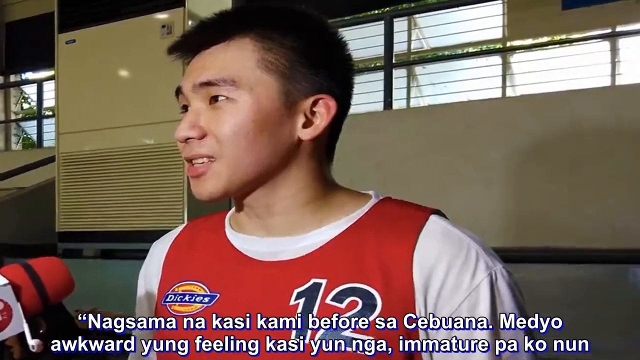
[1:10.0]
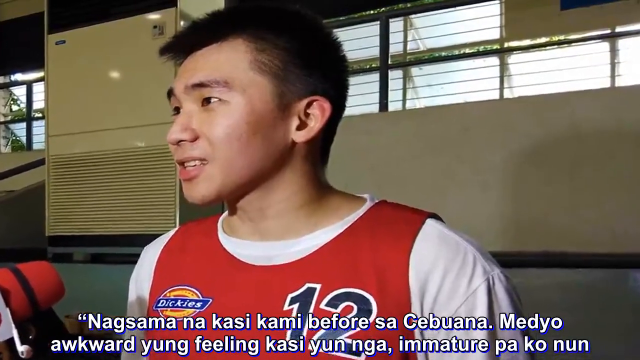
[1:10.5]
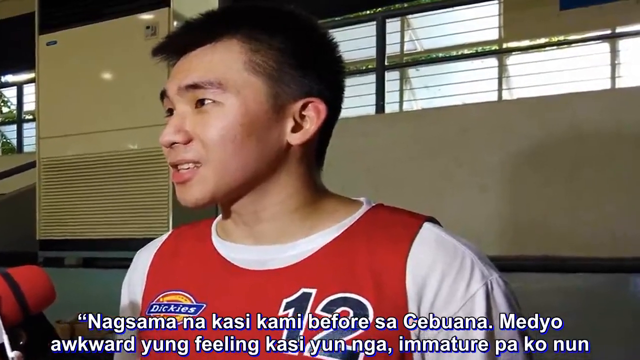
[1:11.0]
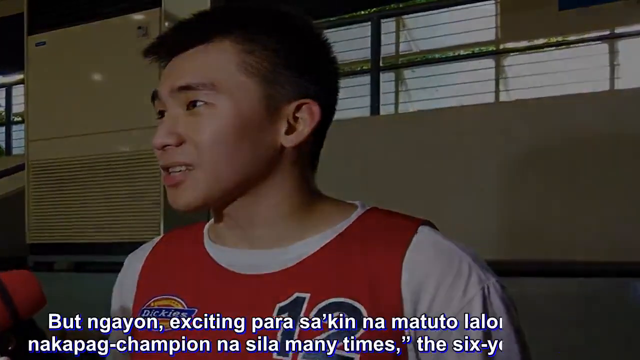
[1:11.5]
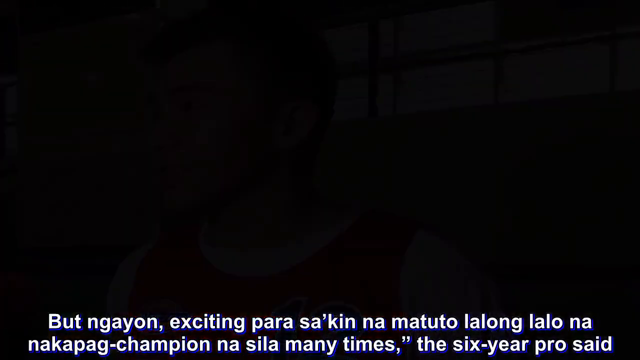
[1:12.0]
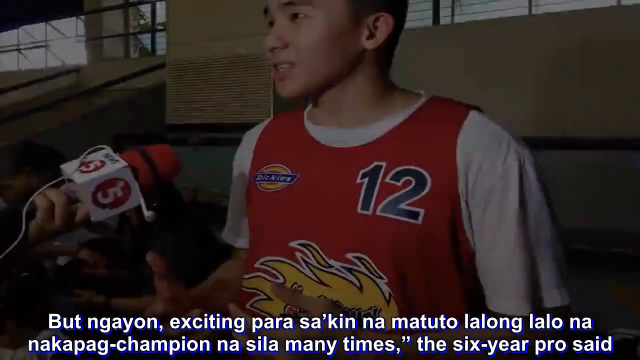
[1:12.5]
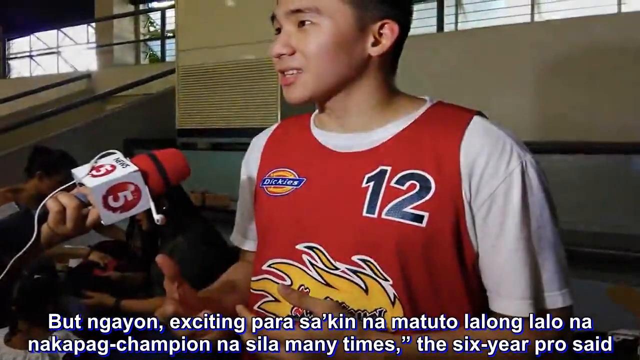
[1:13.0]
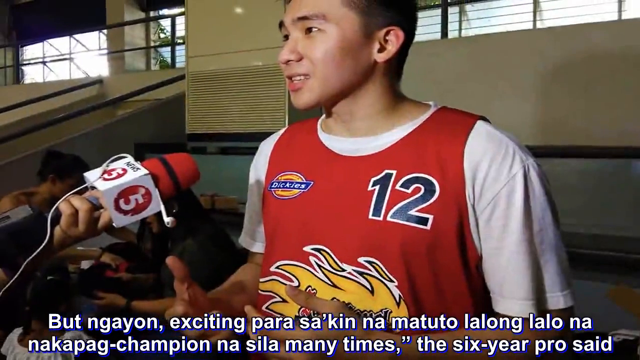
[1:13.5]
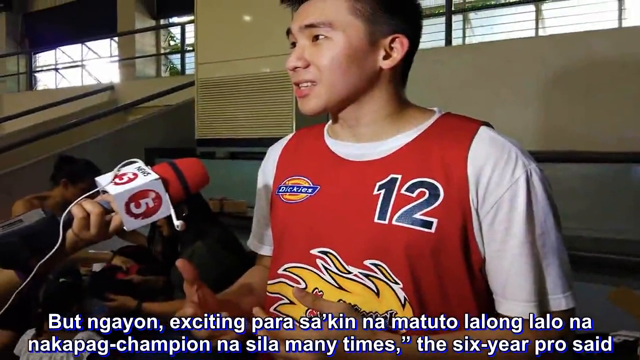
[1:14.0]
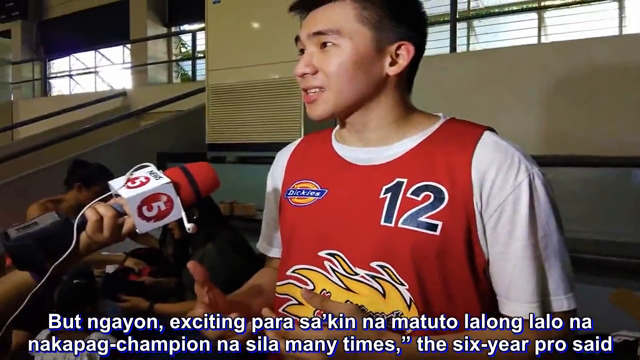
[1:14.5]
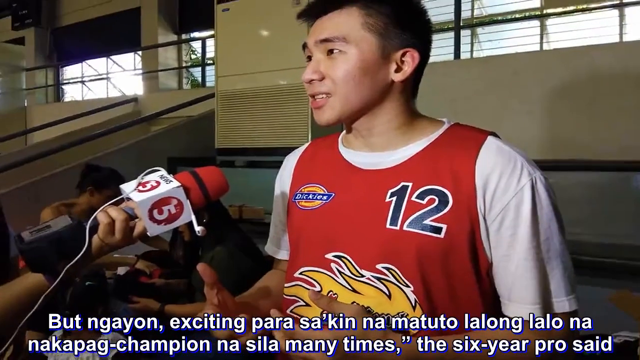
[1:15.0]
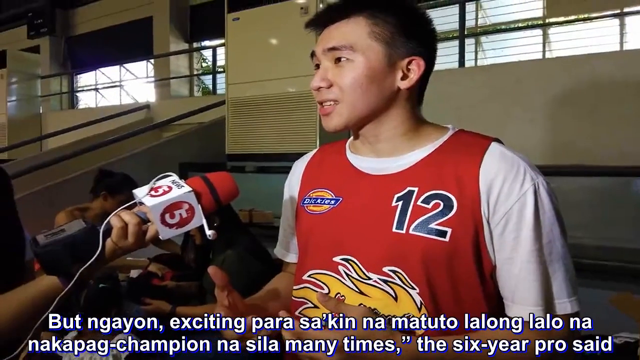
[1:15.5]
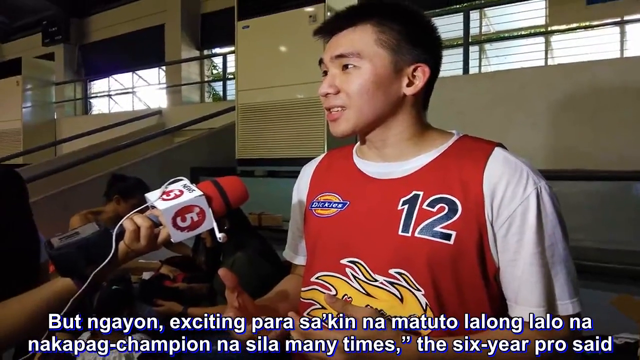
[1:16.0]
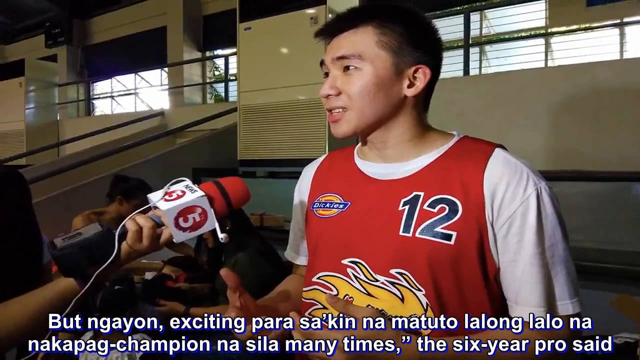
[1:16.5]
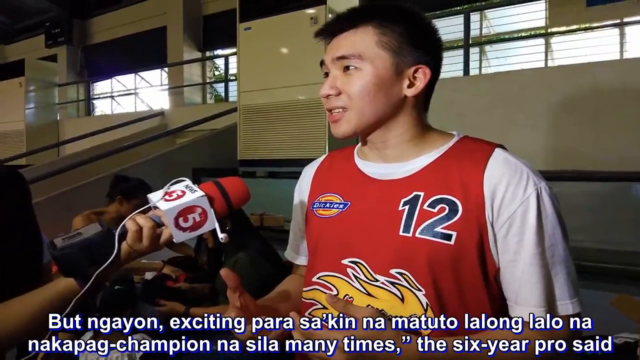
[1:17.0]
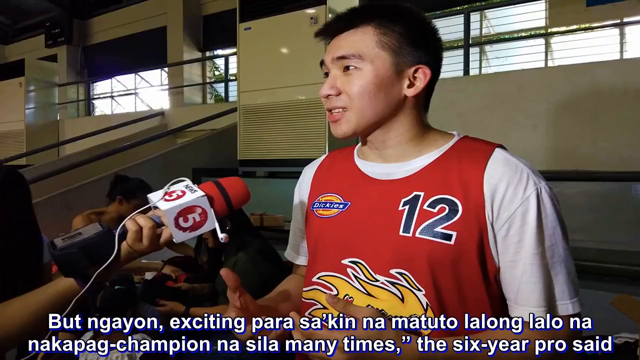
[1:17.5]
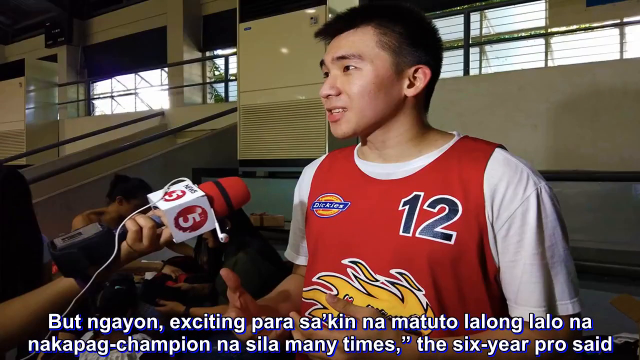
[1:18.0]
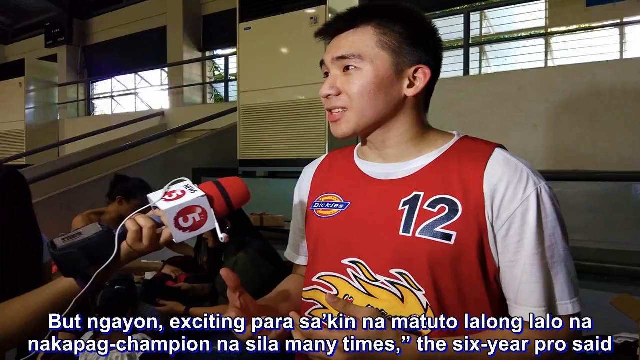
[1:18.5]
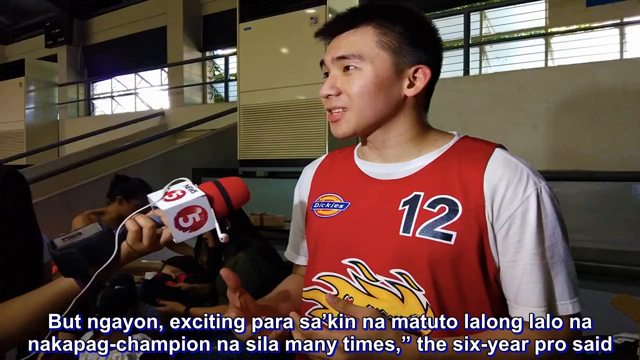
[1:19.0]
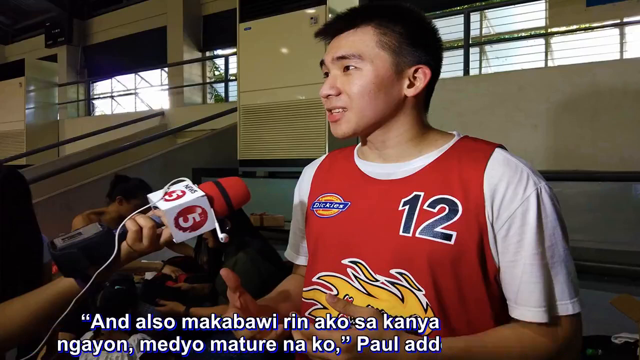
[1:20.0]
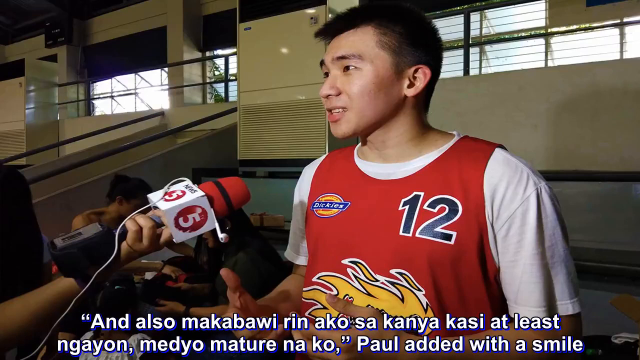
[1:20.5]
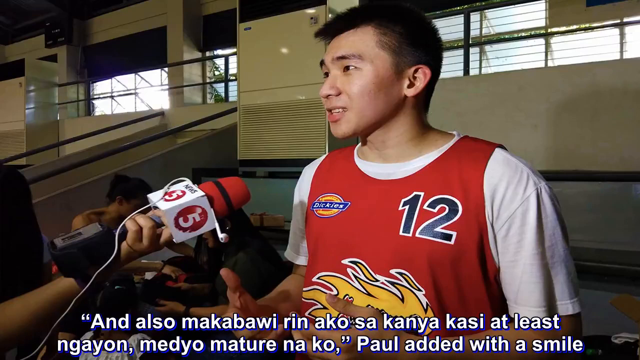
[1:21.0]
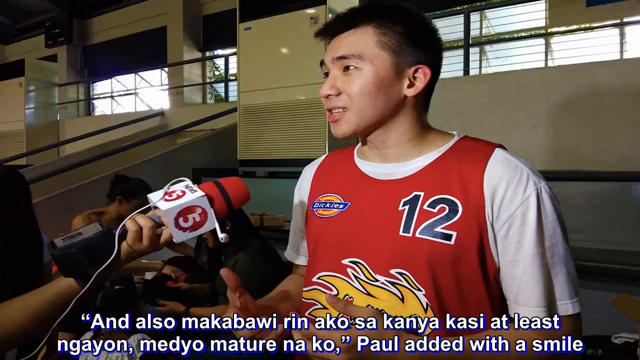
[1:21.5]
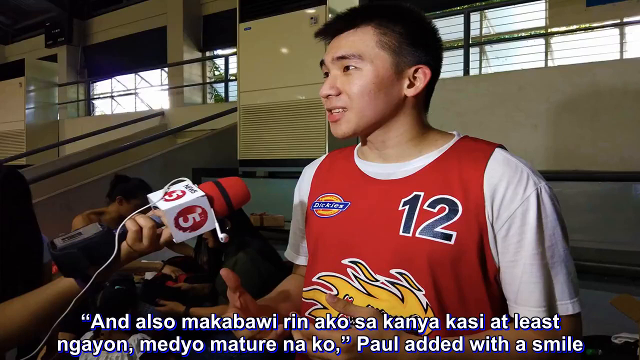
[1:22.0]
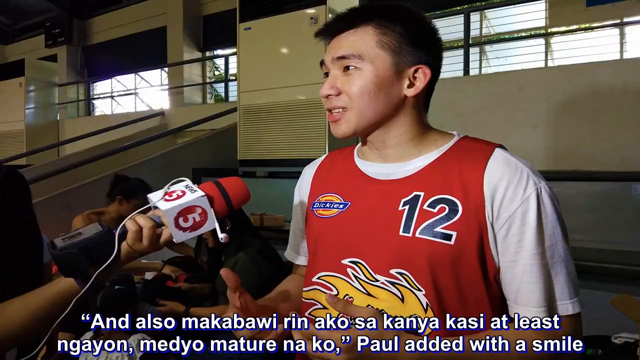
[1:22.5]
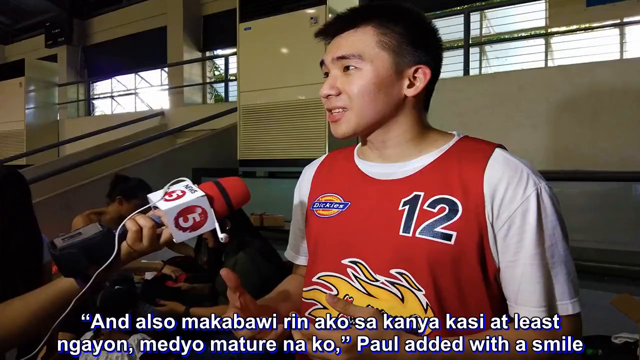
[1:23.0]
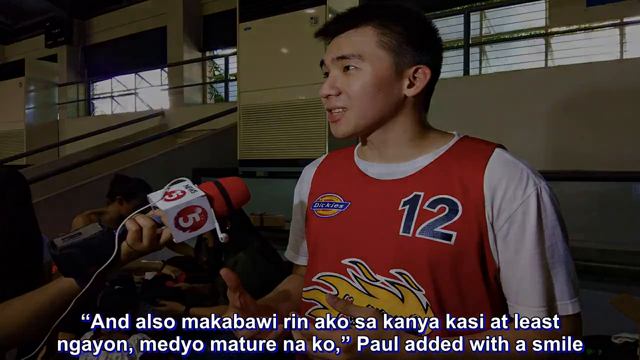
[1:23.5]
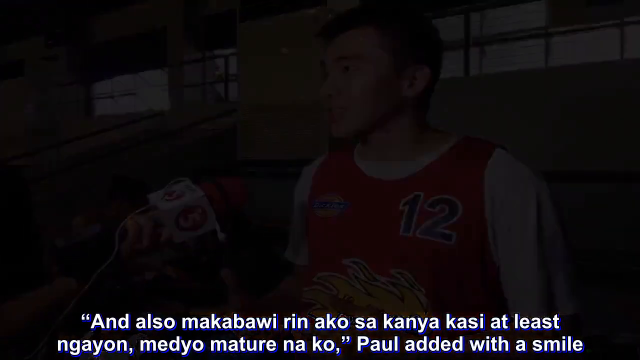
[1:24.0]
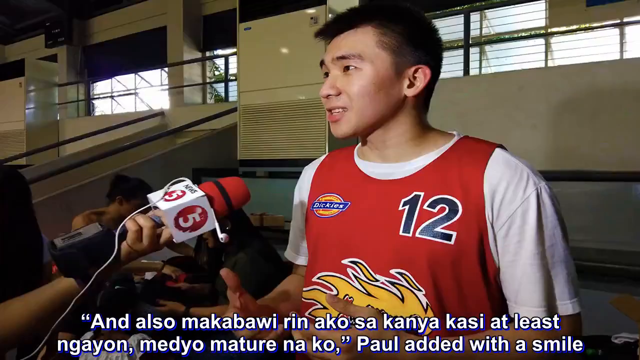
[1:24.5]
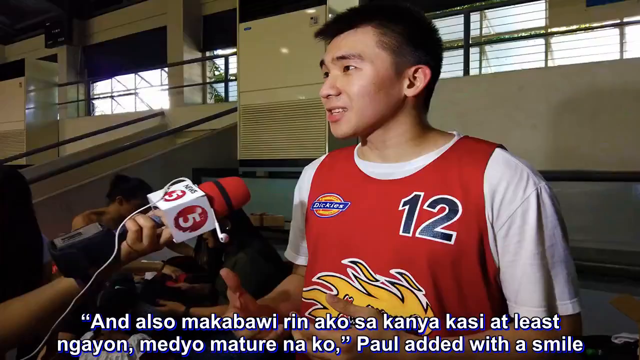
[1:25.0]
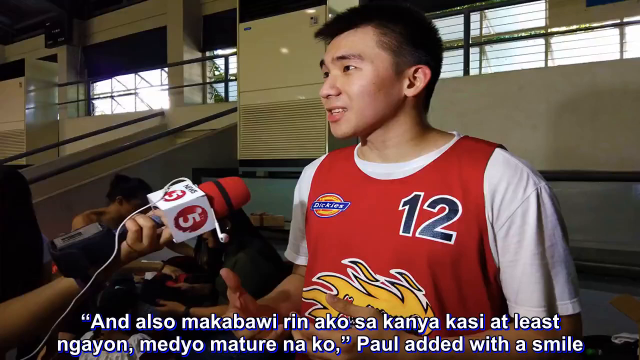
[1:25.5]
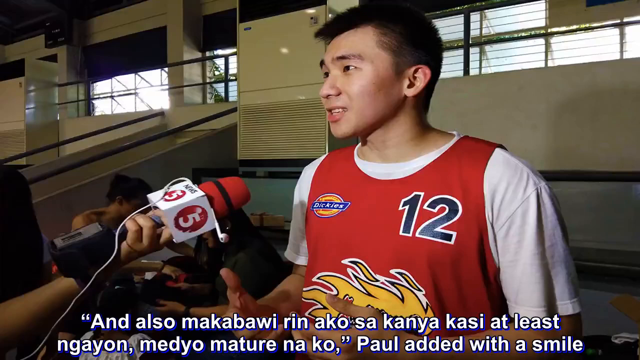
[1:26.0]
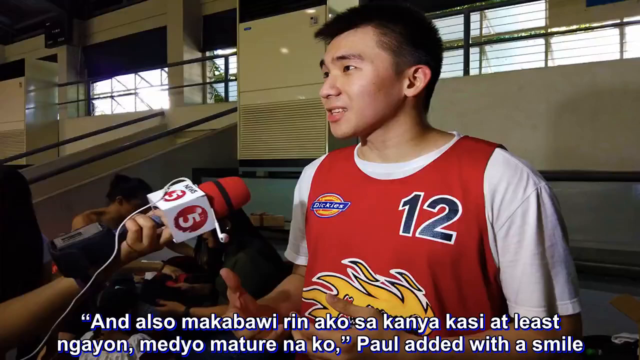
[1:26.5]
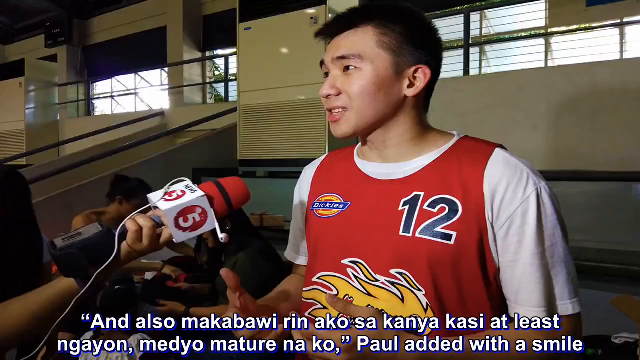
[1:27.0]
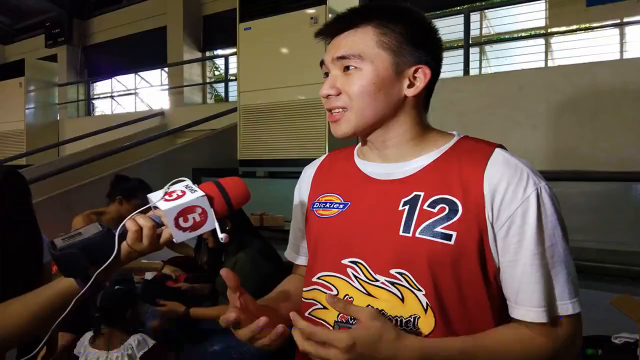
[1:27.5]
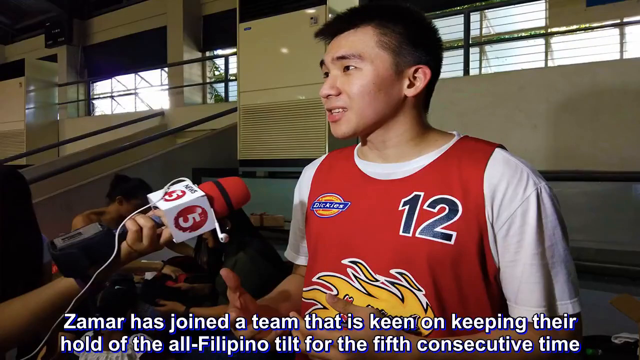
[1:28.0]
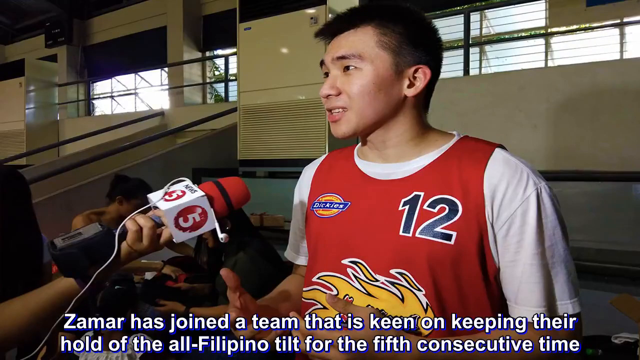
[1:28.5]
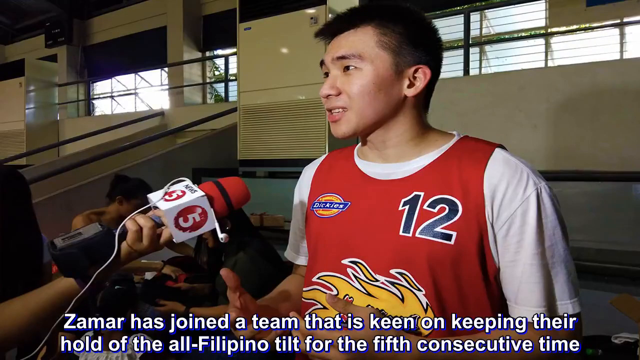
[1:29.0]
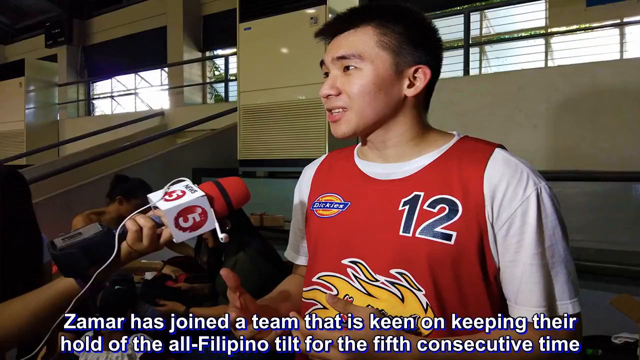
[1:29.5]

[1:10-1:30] The same scene shows the inside of a sort of auditorium or stadium where the man is being interviewed. He is an Asian male in his 20s or 30s with short black hair, wearing a red jersey over a white undershirt. The background is a very white wall, with multiple windows in the top half of the frame and light sort of beaming in, indicating daytime. The image shakes a little before zooming in, then the scene changes to the same image zooming outward. The text at the bottom is in a foreign language and keeps updating. At the bottom left, a woman holds out a white and red microphone with the word "news" and the number five on it, with a corded earbud laid on top of it. Behind the microphone in the background, two women of Asian descent with black hair sit. The woman holding the microphone appears to have a large device on her wrist, like a square box attached to it.